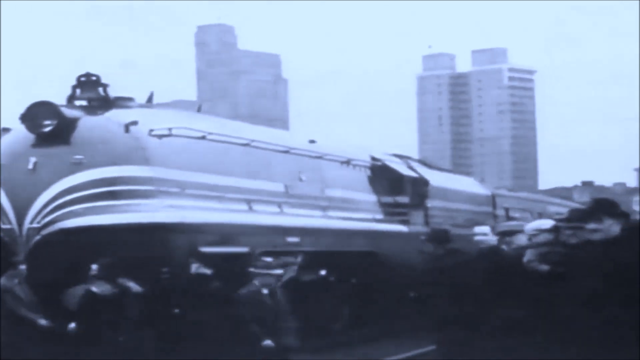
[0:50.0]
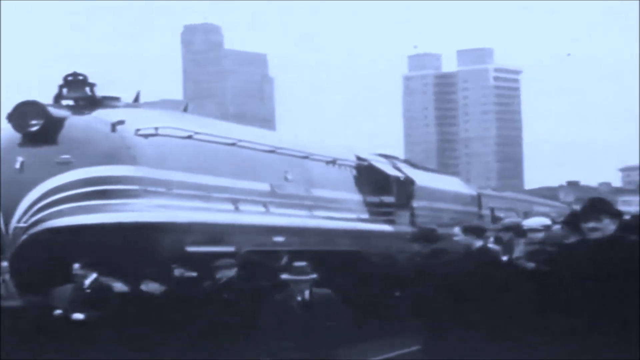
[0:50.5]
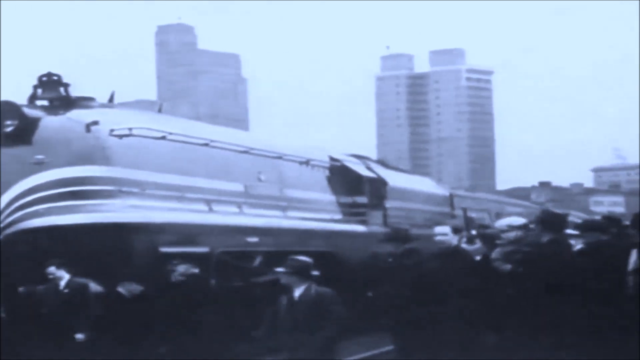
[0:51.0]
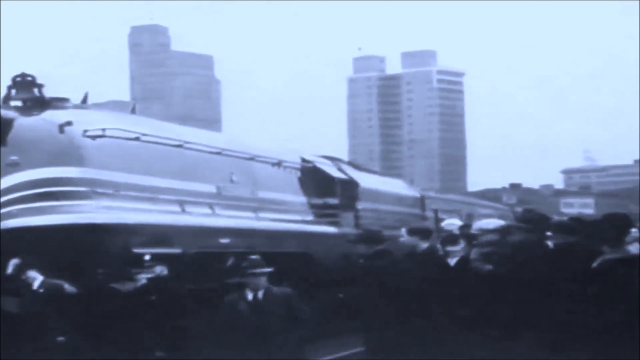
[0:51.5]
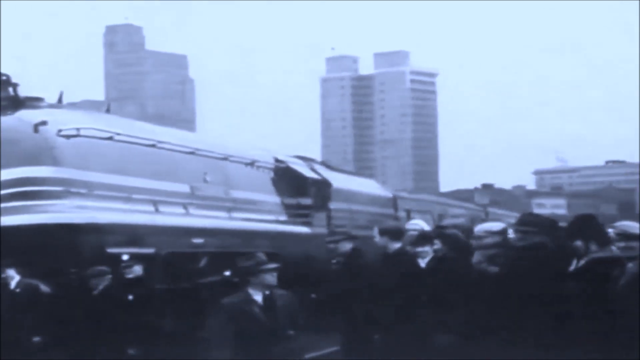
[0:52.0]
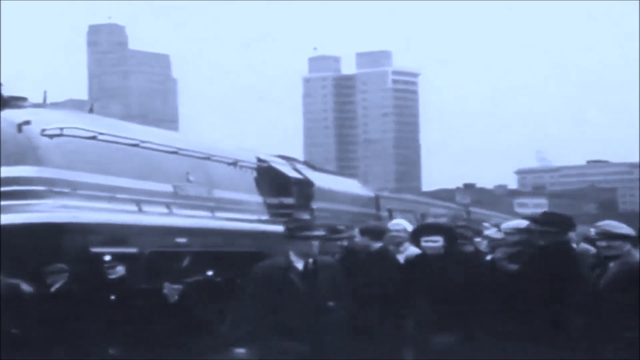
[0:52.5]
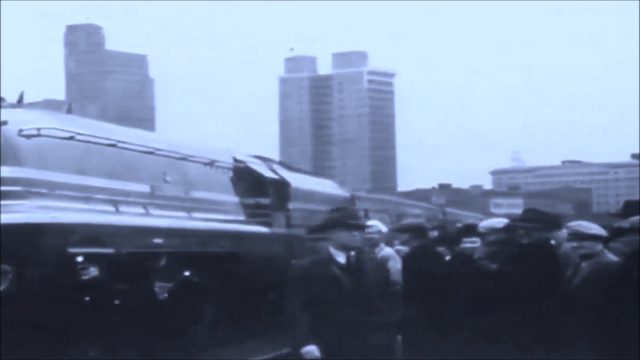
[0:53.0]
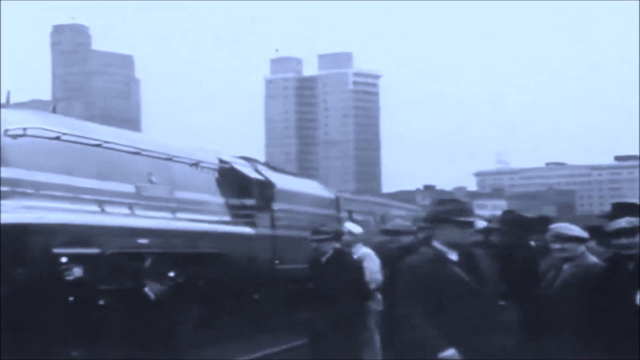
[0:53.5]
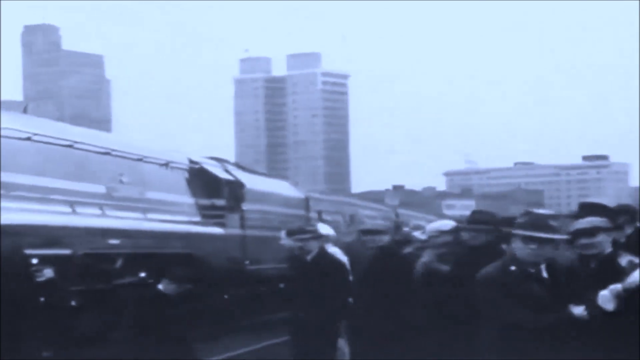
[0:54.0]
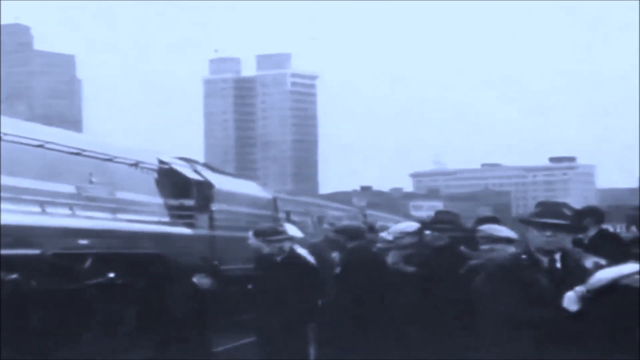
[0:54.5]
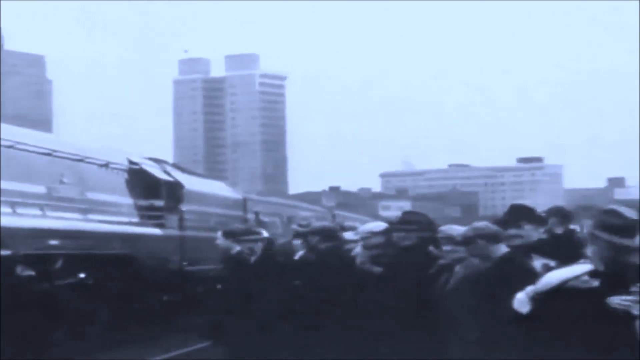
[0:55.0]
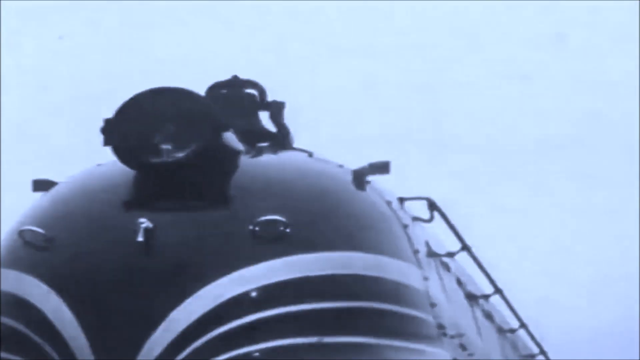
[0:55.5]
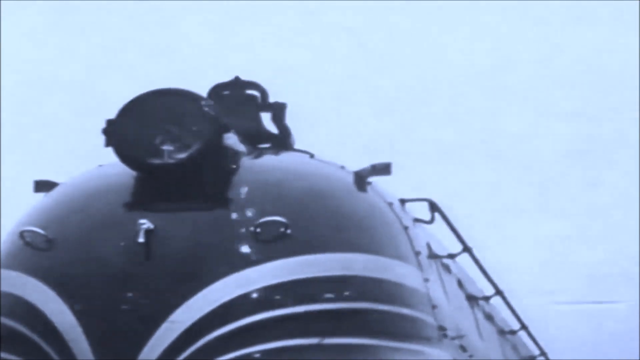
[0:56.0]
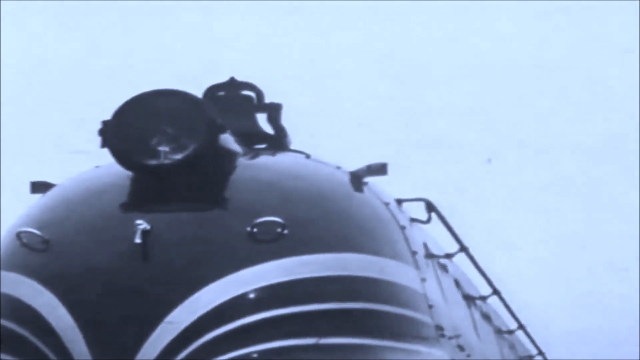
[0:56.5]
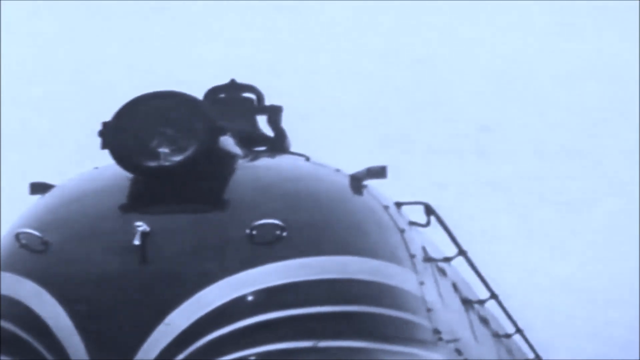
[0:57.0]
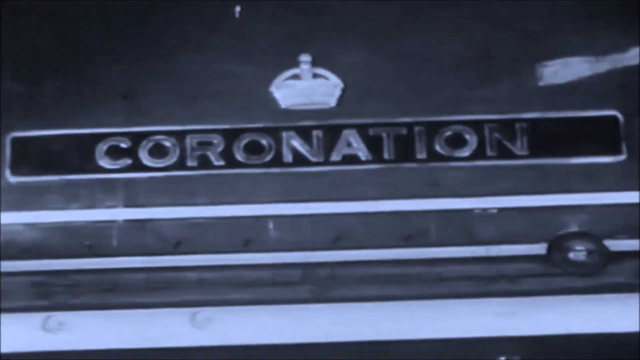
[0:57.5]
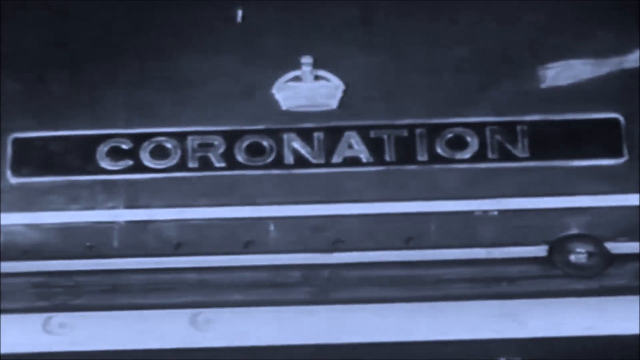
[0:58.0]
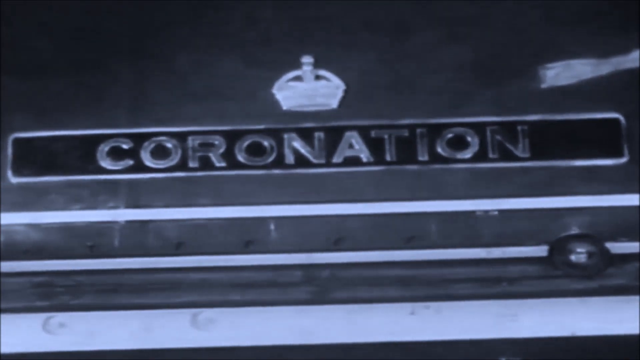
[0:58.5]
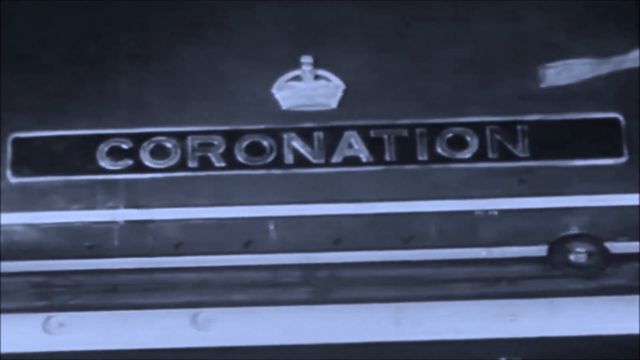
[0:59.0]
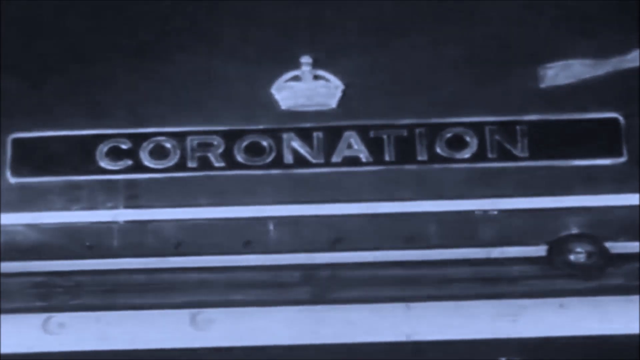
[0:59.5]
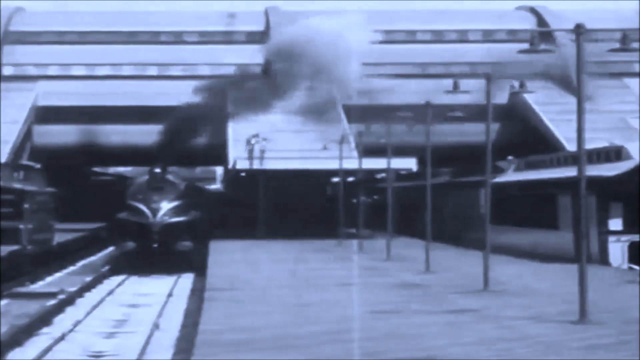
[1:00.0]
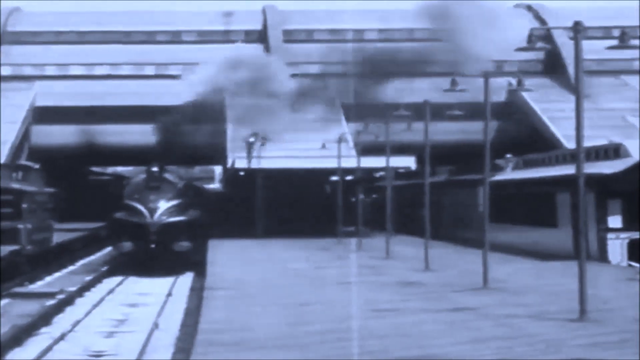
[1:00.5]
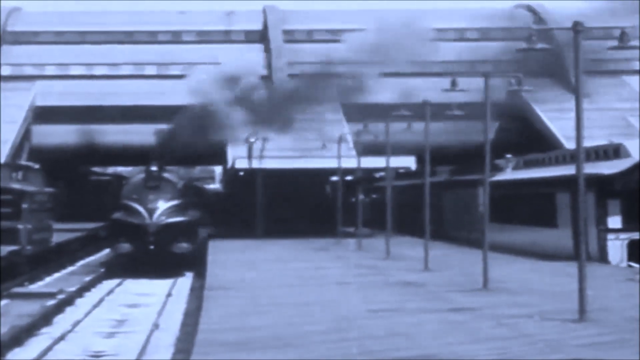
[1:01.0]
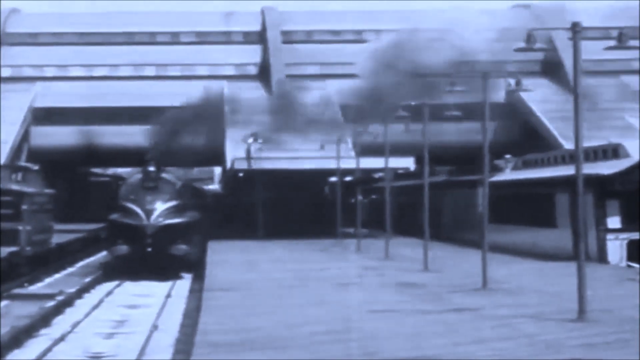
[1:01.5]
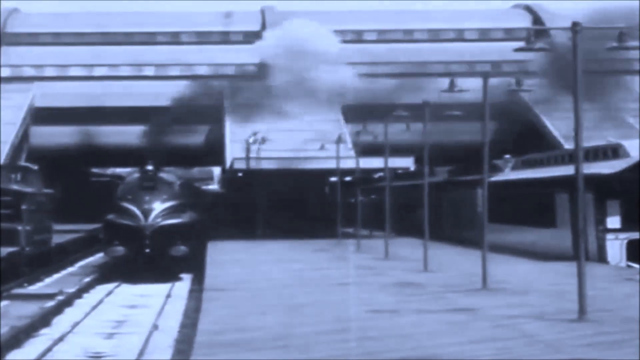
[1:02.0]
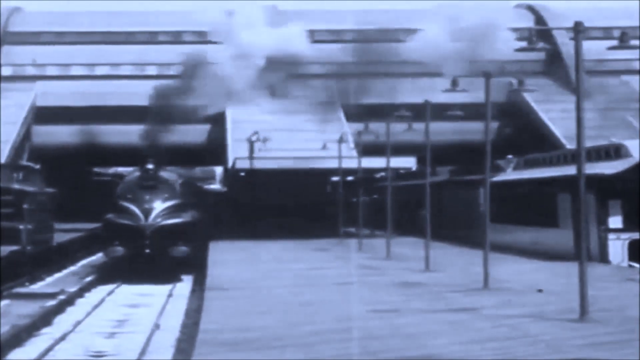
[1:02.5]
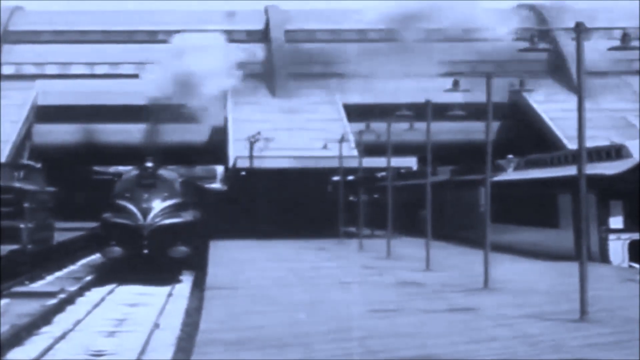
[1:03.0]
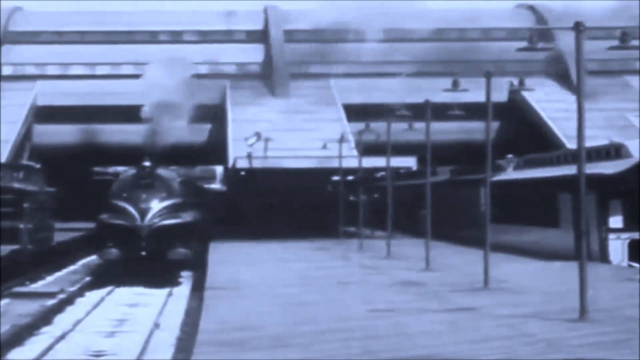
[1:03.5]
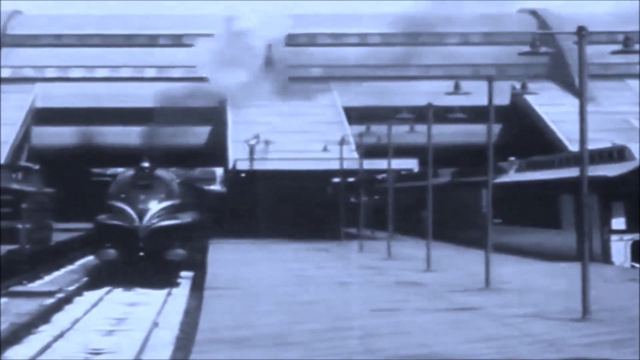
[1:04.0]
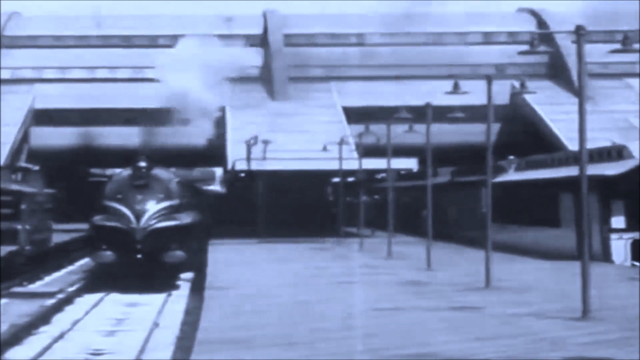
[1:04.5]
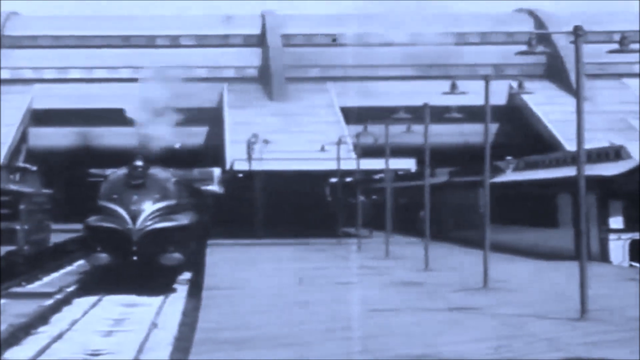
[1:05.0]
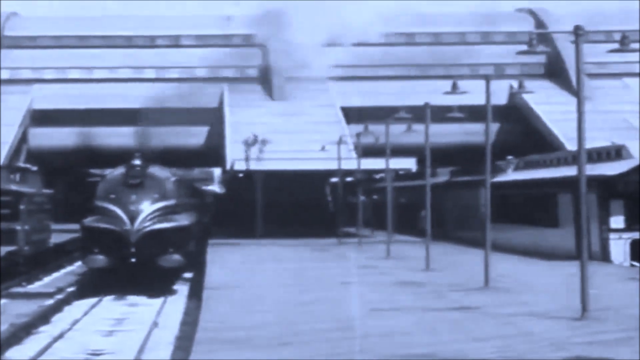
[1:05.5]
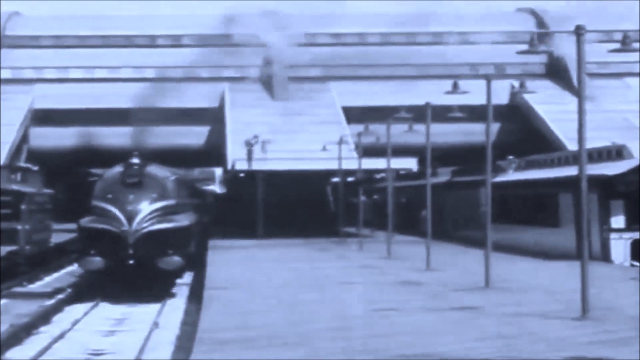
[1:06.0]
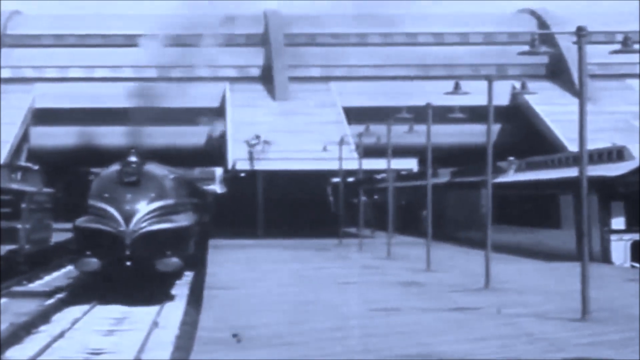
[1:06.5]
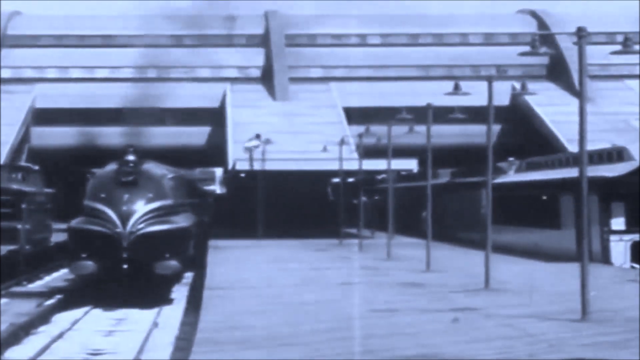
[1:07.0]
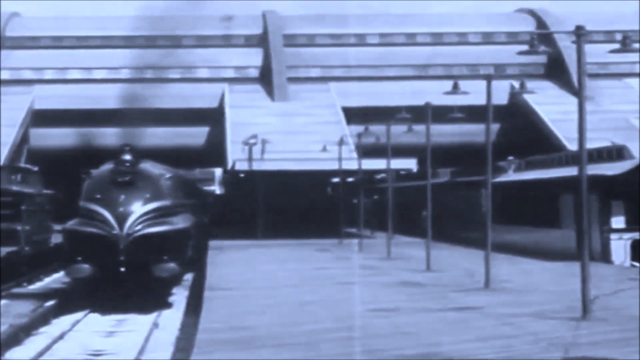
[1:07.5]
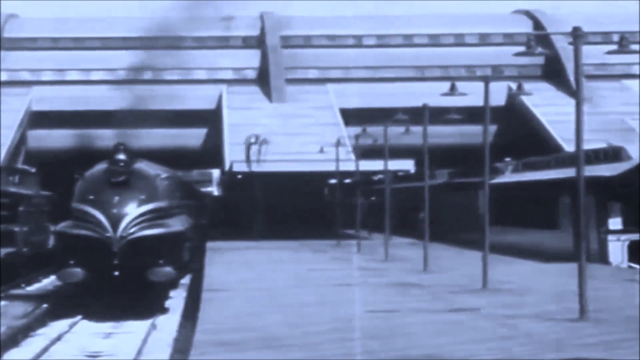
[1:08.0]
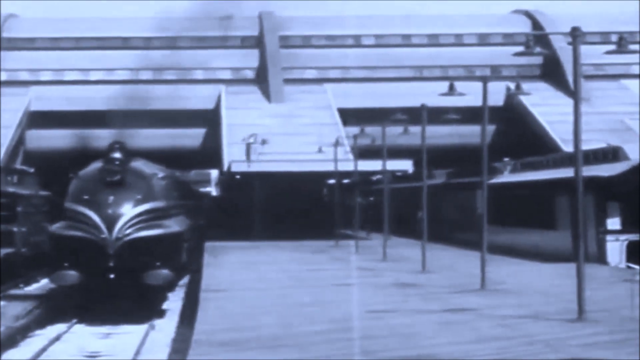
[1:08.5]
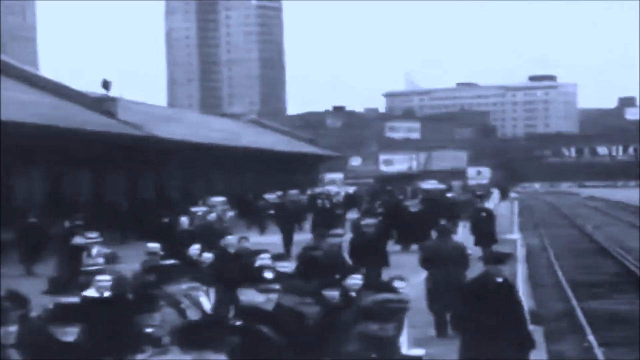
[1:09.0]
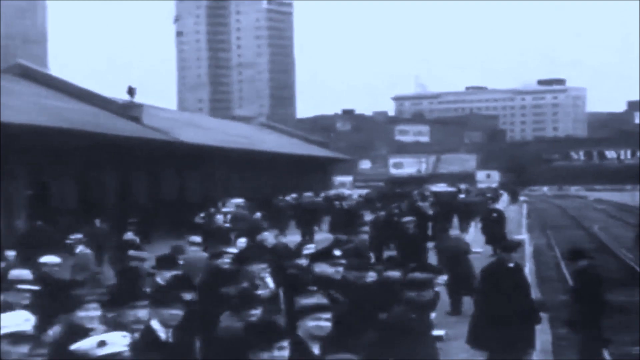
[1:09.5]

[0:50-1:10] The train is at the forefront, taking up most of the screen, with high-rise buildings in the background, suggesting the setting is possibly in or near a city or industrial area. The train has a bell on top, a headlight, and a tiny smokestack at the front. The camera zooms out to show a large group of men, all wearing fedora hats, surrounding the train and looking at it; there may be women too, but they are hard to see. The camera then zooms in on a particular part of the train where the word "Coronation" appears, seemingly indicating this is the train's first run. The scene jumps to the train running down the tracks with smoke coming out of it, heading straight toward the camera. The camera then pans out to show a large group of people watching the train.